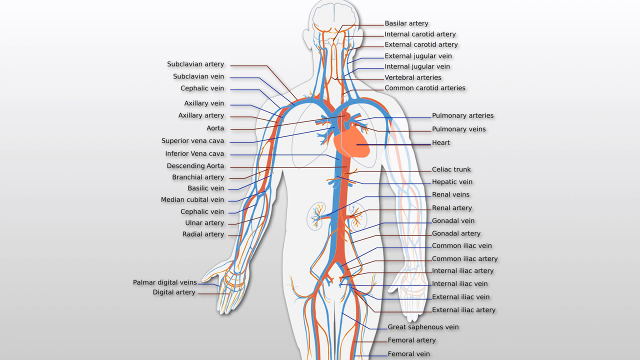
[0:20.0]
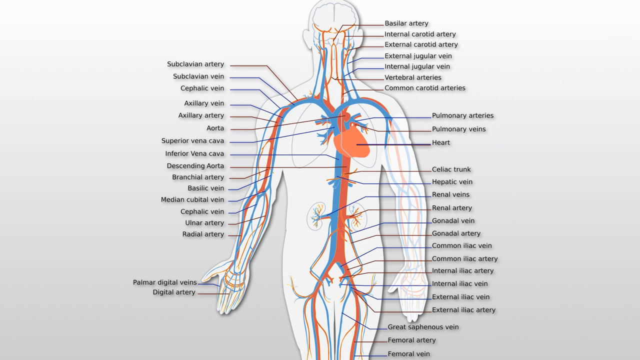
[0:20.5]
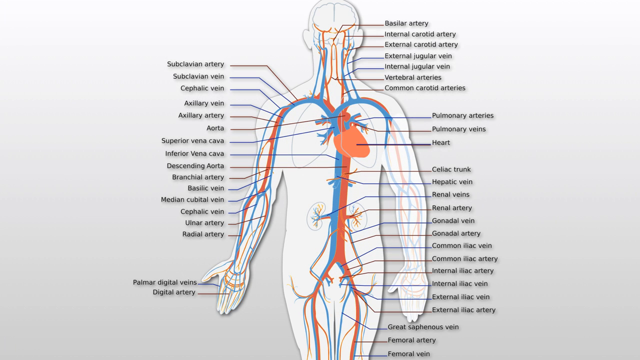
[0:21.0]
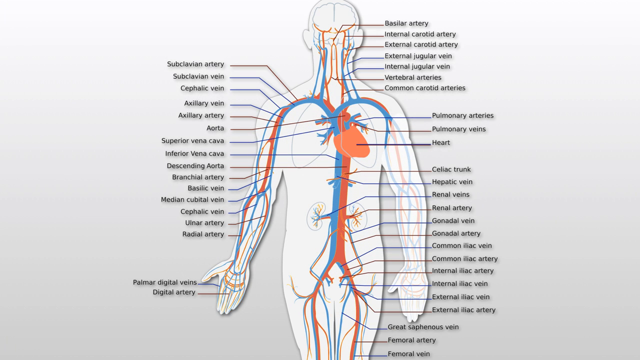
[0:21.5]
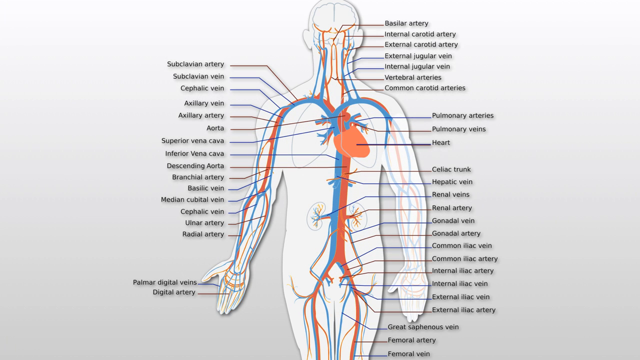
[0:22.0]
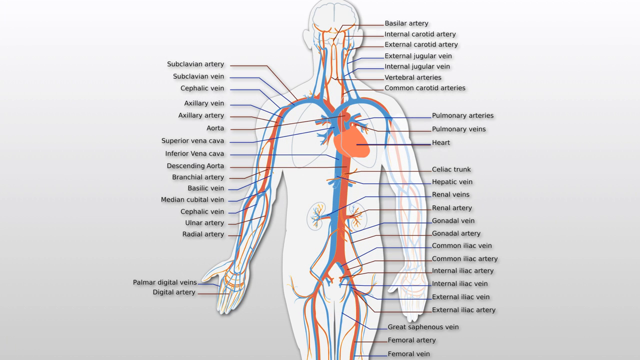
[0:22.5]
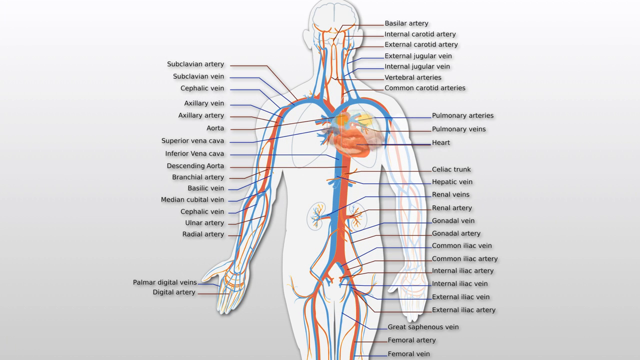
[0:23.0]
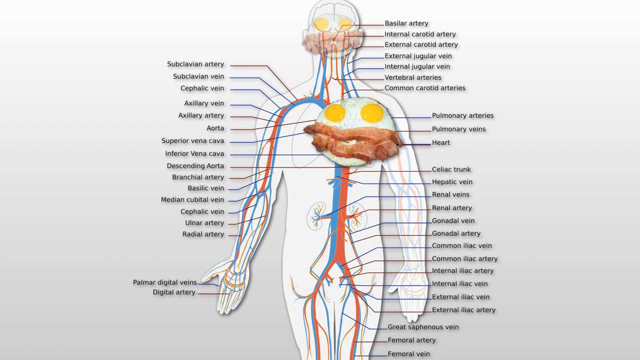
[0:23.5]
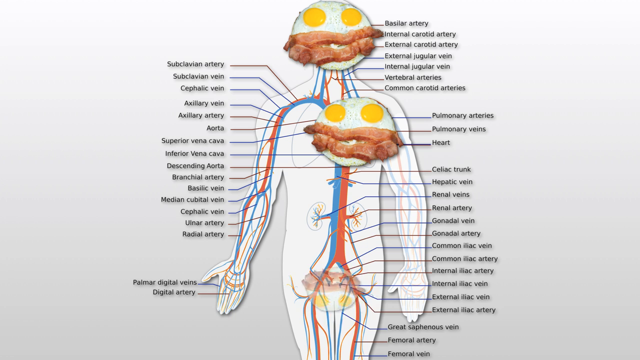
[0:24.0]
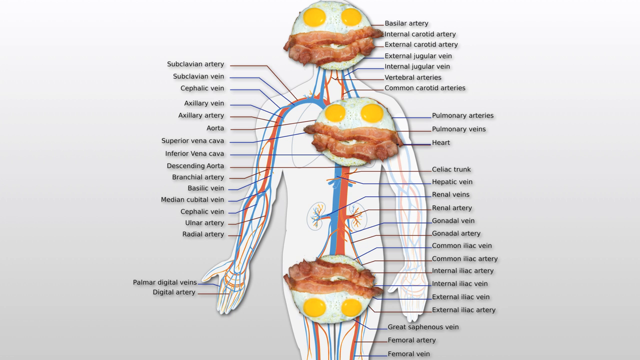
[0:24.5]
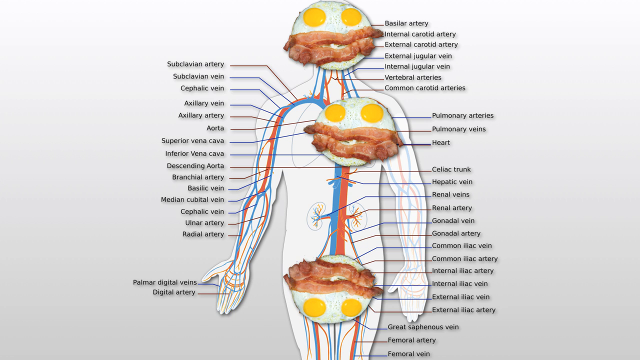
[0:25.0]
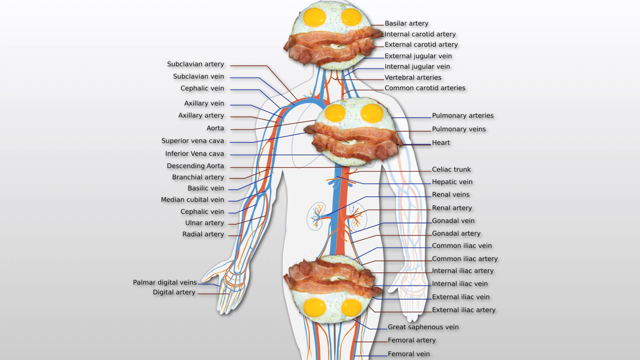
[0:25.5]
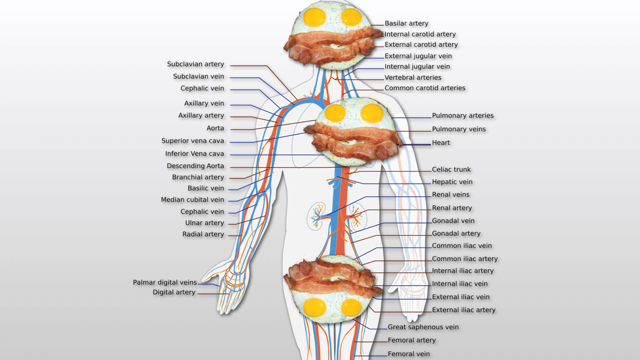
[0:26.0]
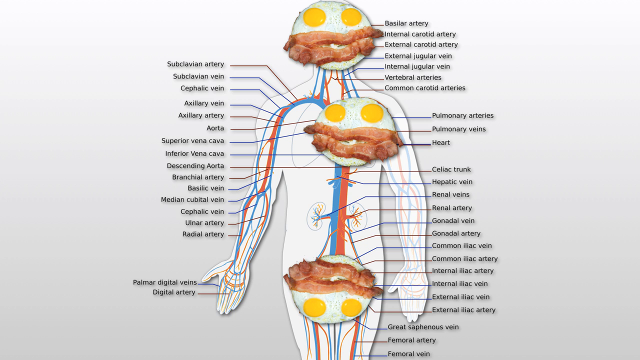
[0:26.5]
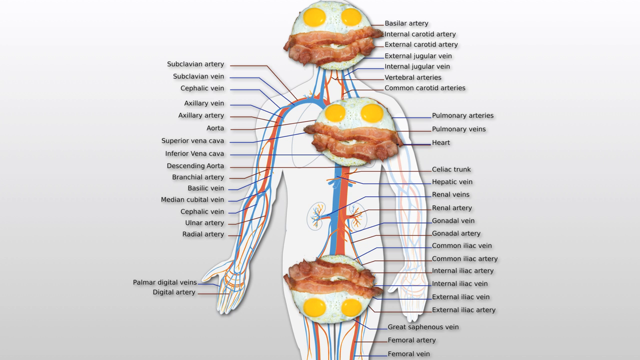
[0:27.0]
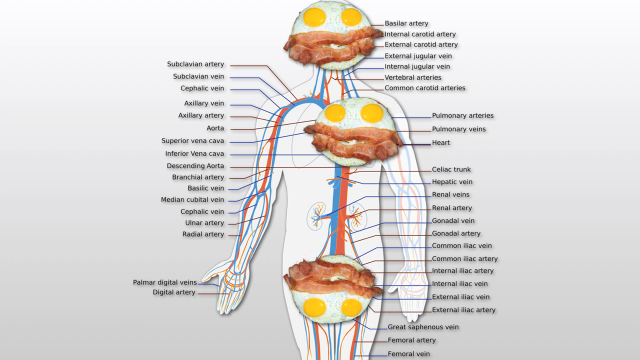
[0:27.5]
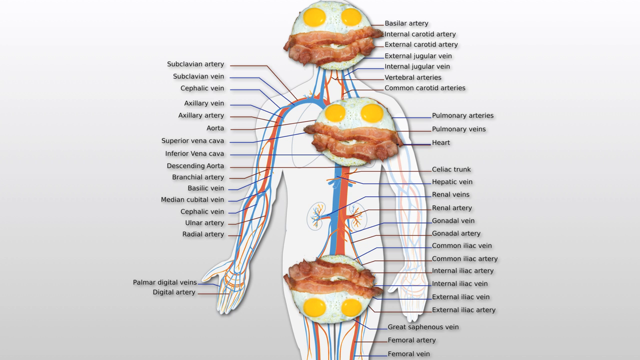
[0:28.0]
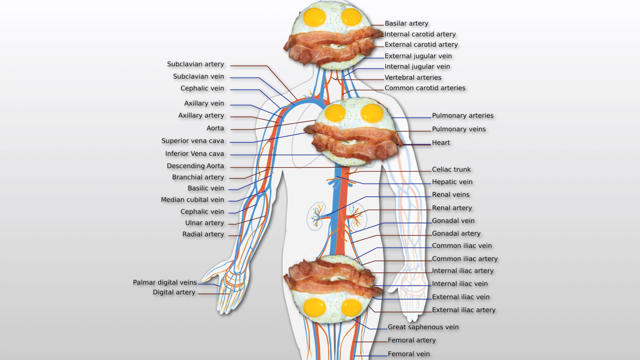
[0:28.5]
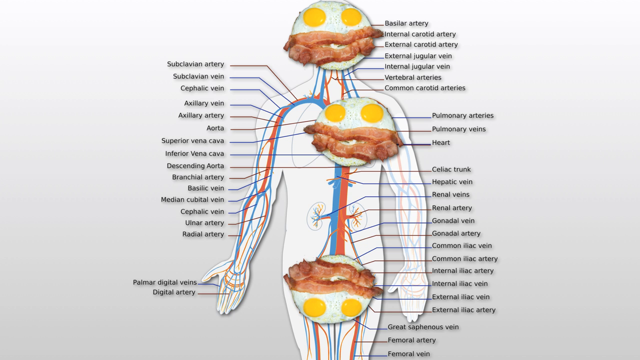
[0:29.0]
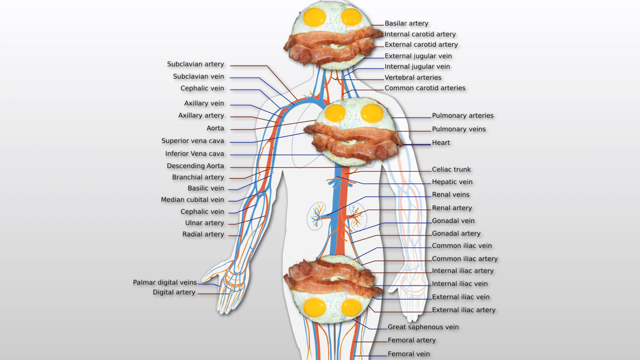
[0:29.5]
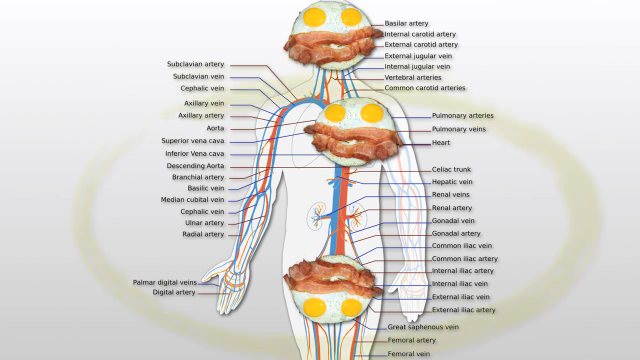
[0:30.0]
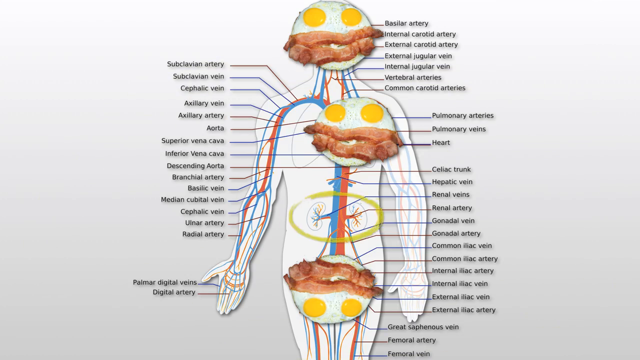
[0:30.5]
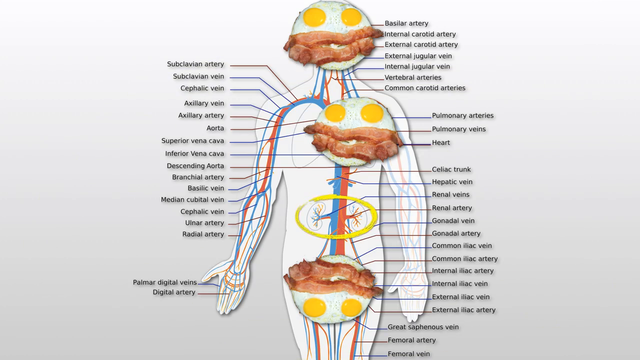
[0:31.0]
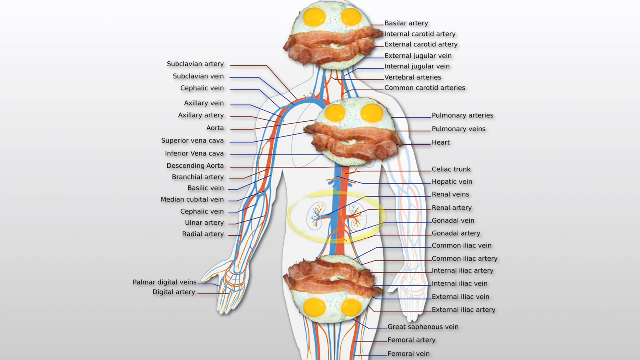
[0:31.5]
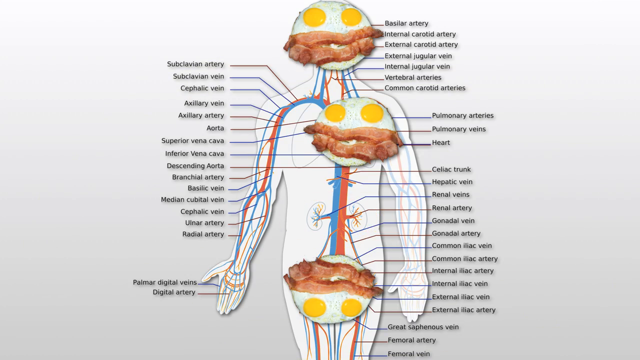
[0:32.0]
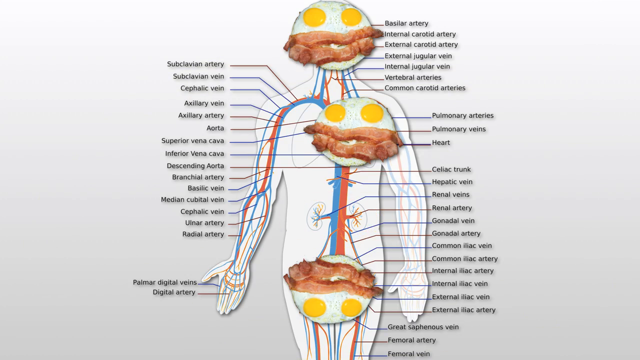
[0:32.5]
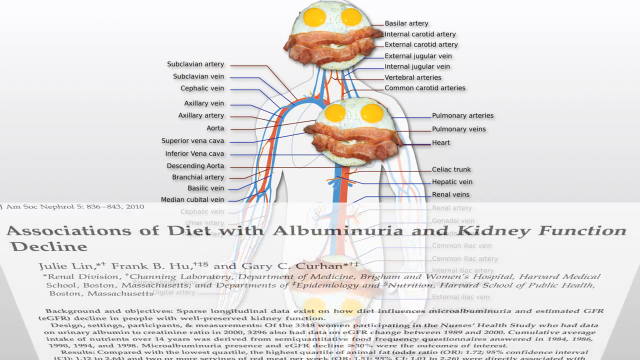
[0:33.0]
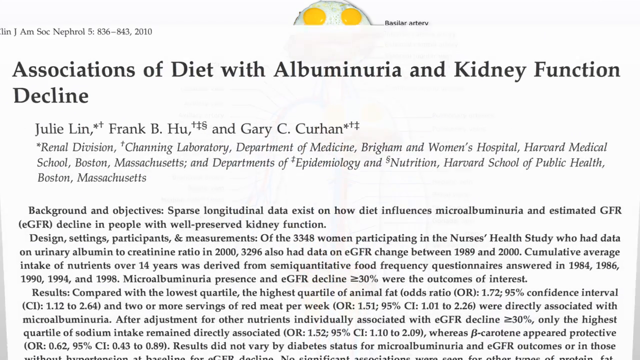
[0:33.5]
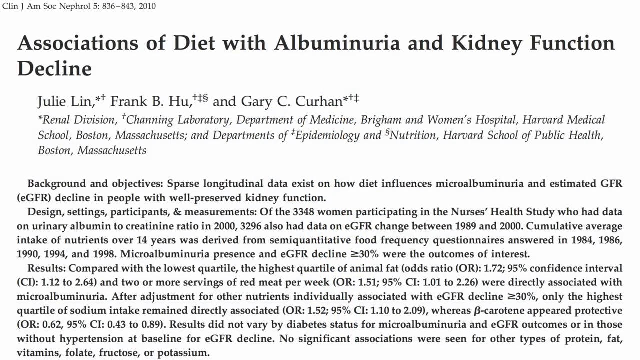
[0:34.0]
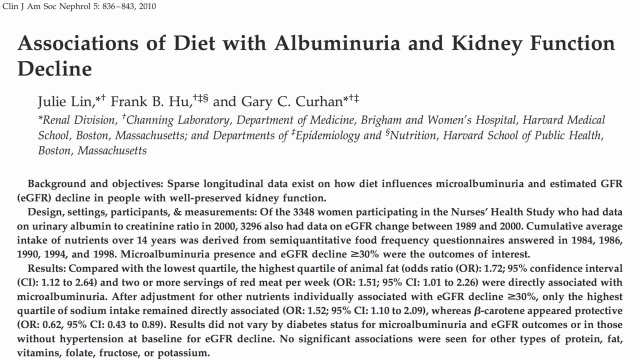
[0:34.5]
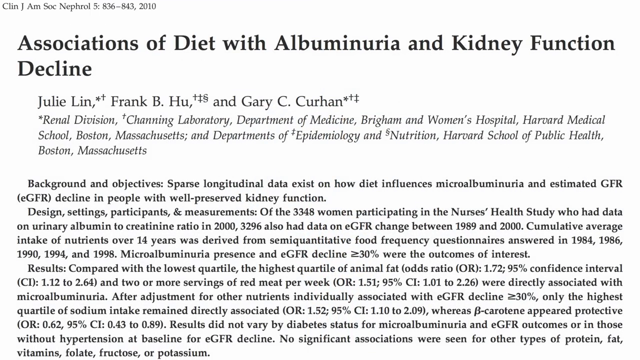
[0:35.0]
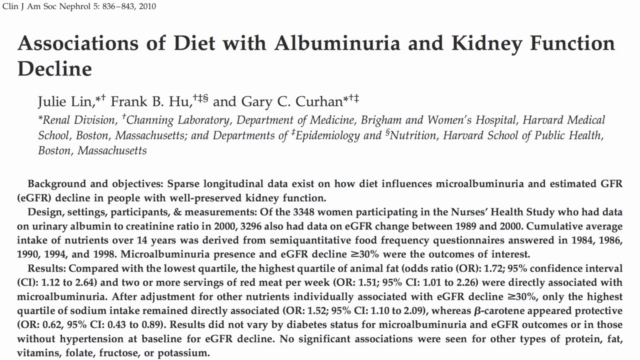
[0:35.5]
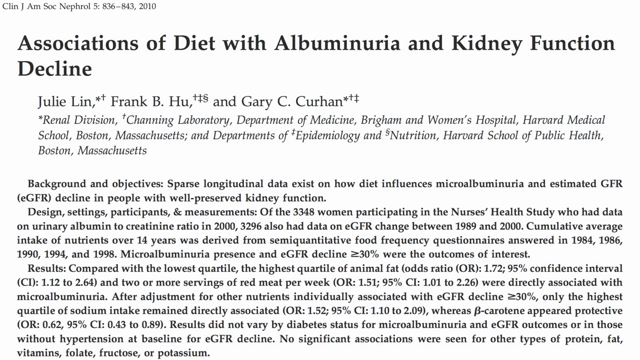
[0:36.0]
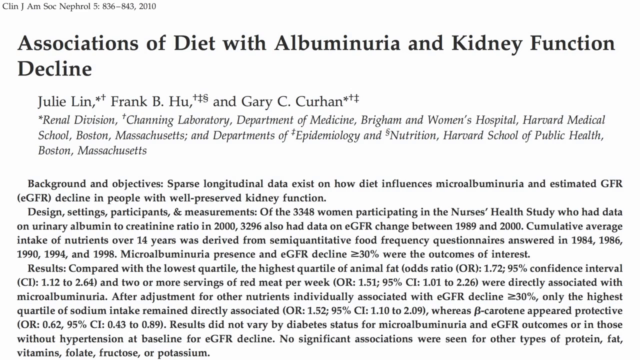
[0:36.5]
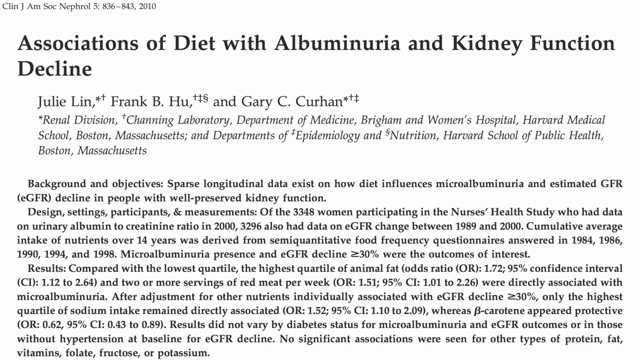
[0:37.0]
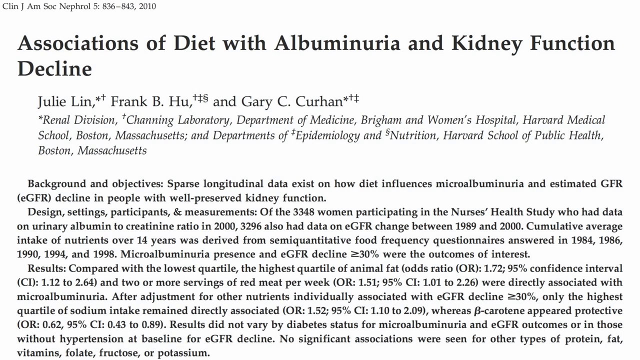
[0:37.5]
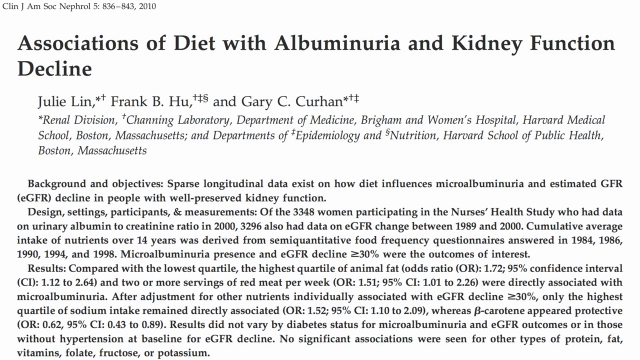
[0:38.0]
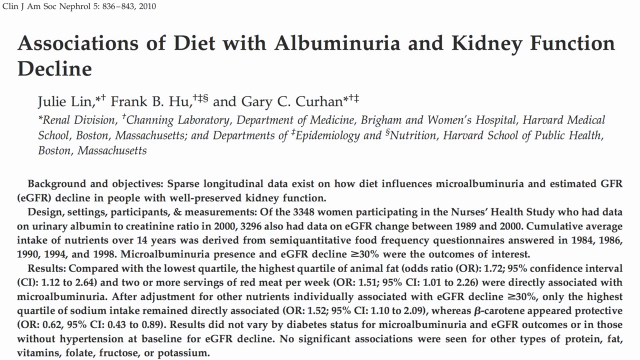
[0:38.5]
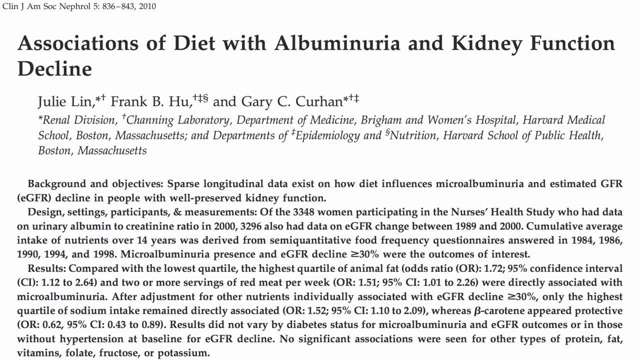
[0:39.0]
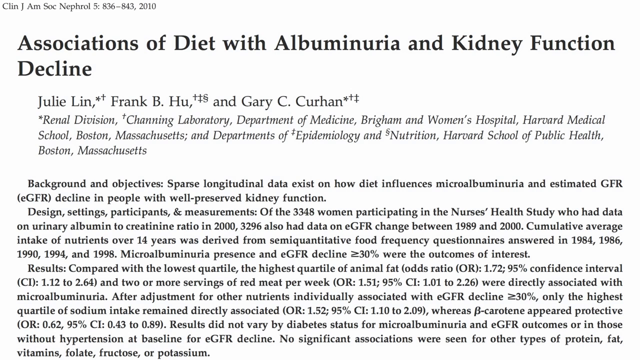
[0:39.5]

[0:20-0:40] A diagram of the circulatory system appears, showing a man's body that is kind of white and gray, with some vessels in blue and some in red on top; it looks like some arteries are blue and some are red. Many parts are labeled, from the subclavian artery all the way down to the radial artery on one side, and from the basilar artery down to the external iliac artery on the other. Then bacon and eggs pop up in the brain, then in the heart area, and then in the groin area.